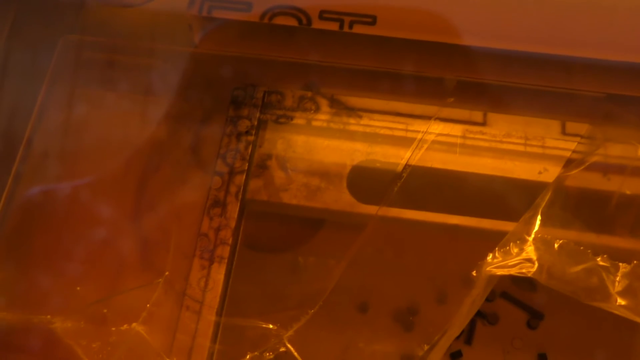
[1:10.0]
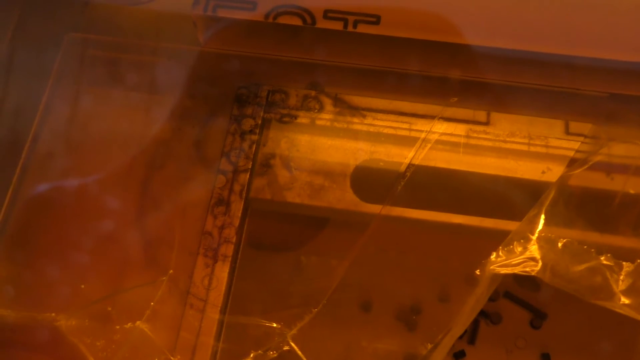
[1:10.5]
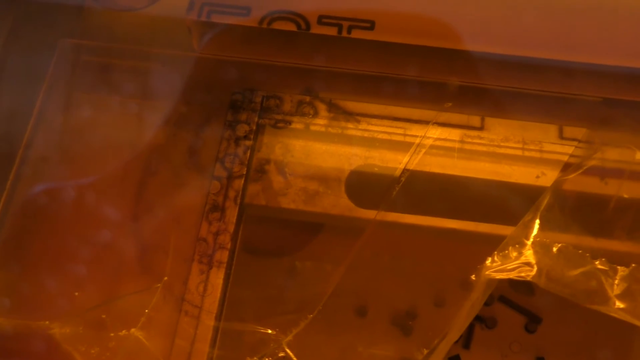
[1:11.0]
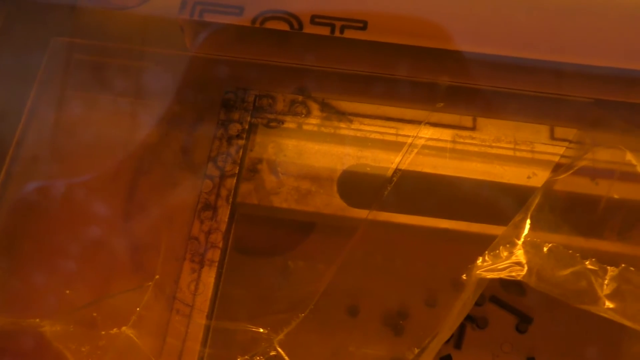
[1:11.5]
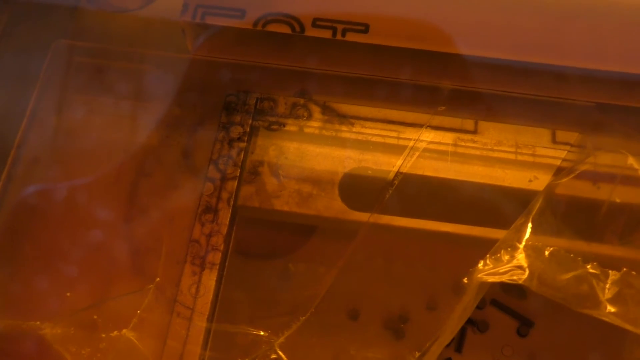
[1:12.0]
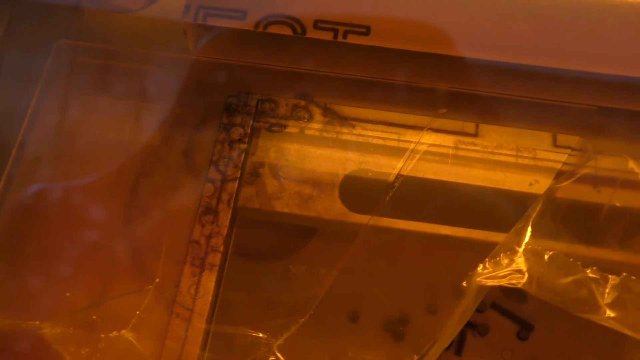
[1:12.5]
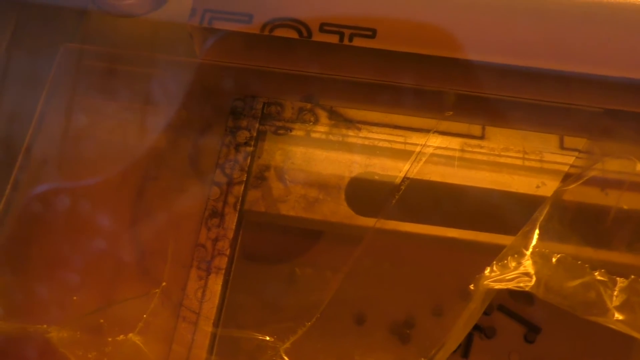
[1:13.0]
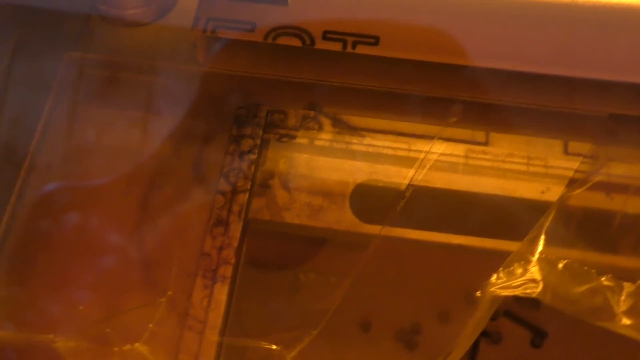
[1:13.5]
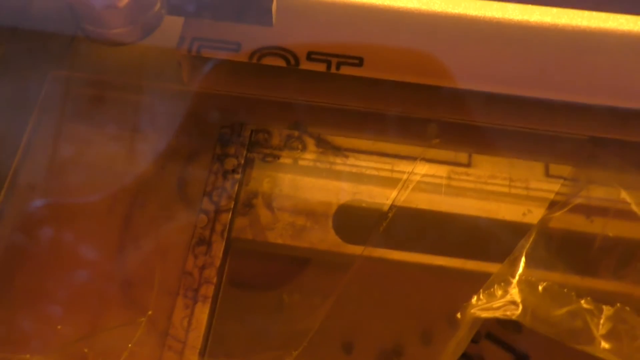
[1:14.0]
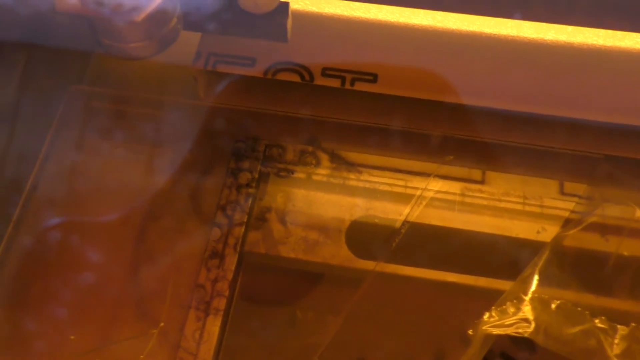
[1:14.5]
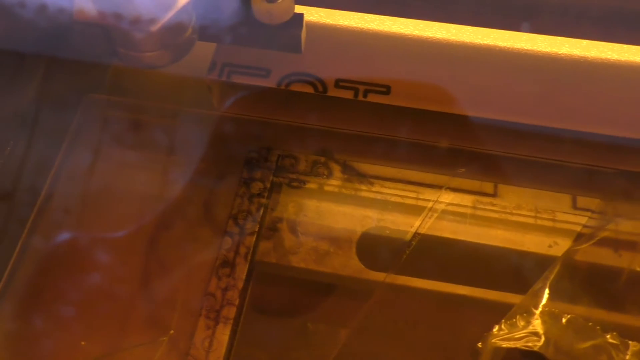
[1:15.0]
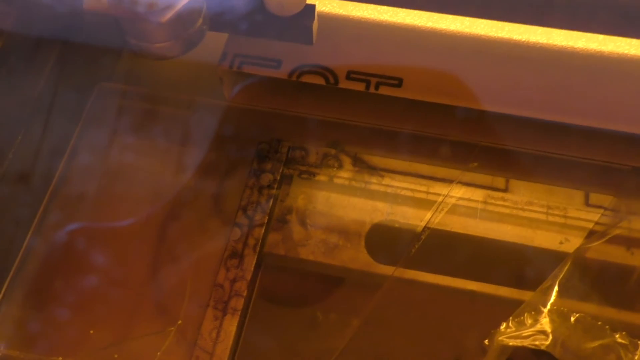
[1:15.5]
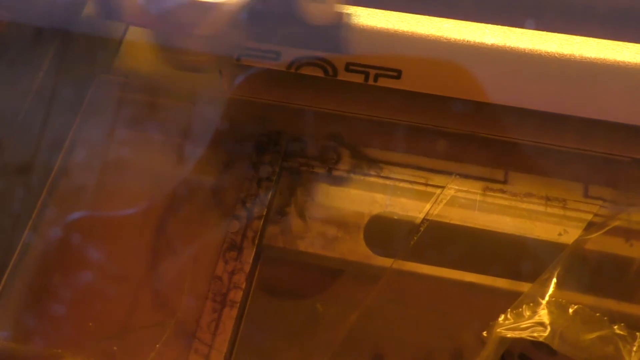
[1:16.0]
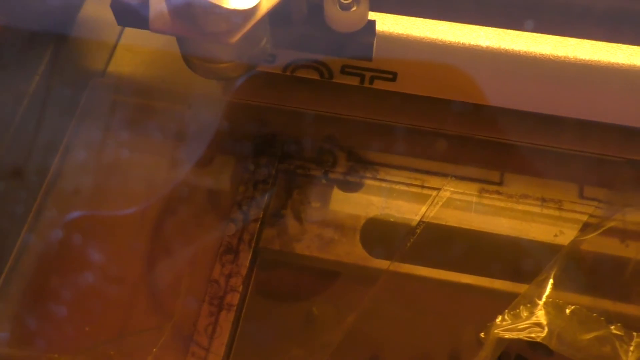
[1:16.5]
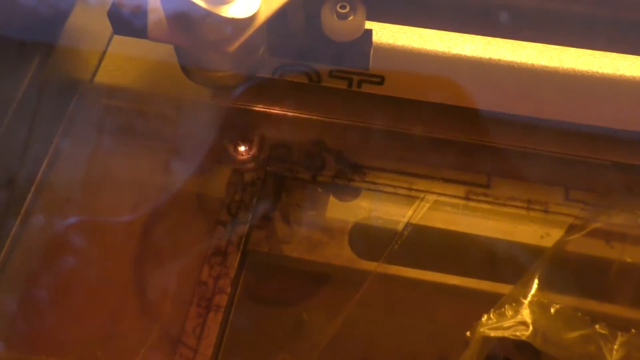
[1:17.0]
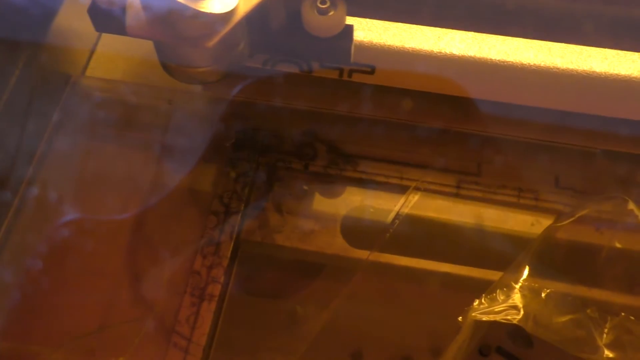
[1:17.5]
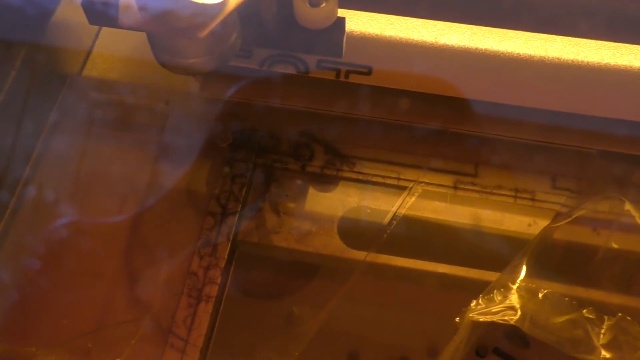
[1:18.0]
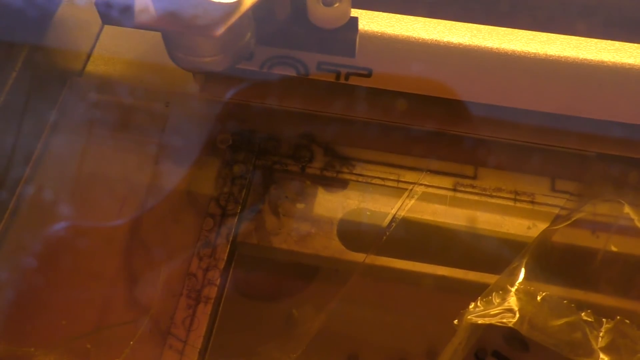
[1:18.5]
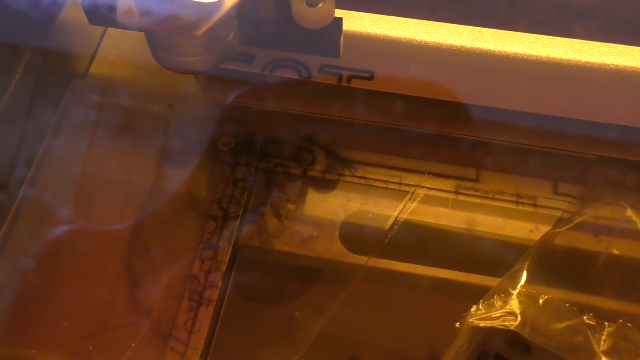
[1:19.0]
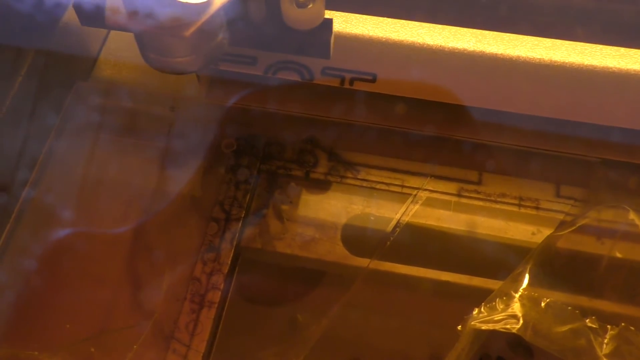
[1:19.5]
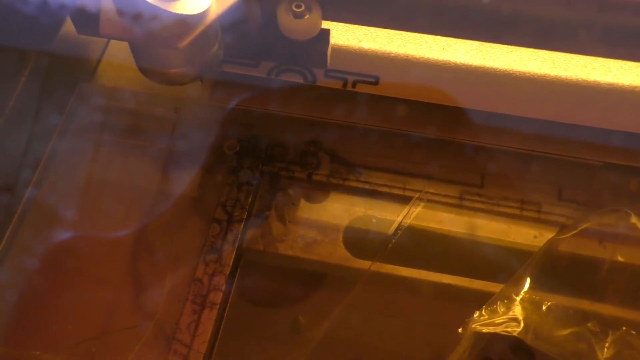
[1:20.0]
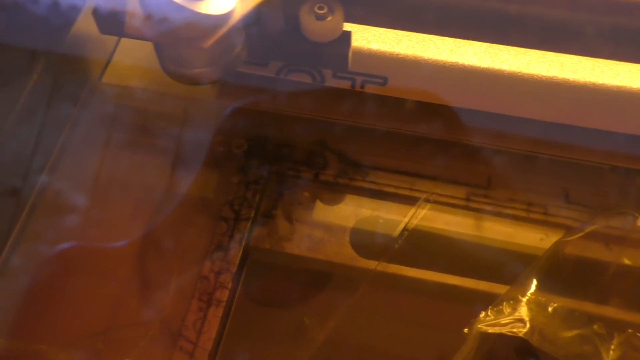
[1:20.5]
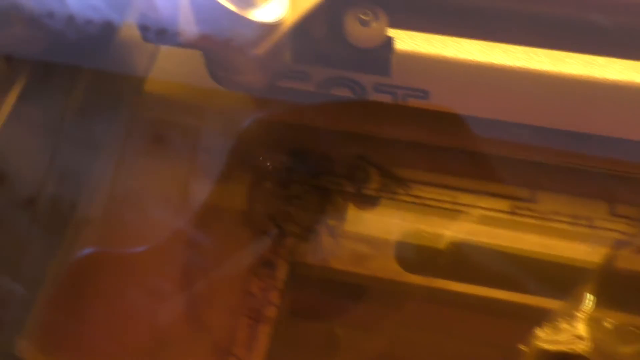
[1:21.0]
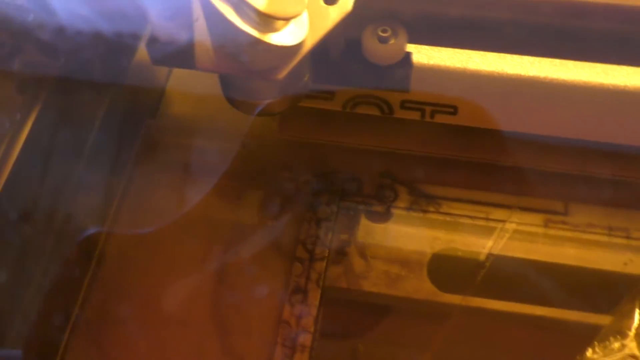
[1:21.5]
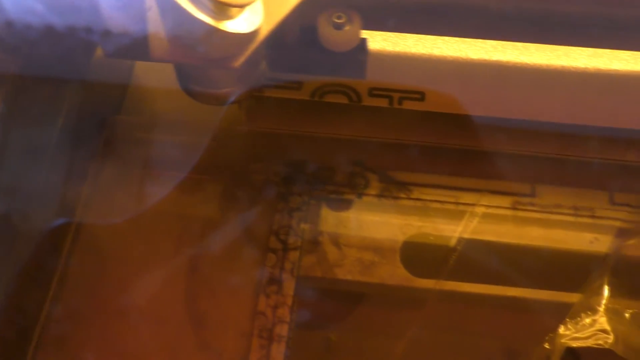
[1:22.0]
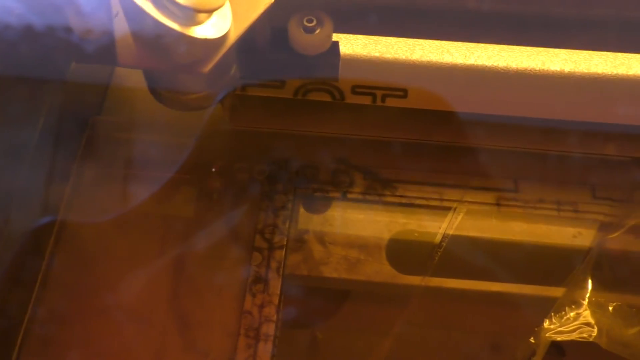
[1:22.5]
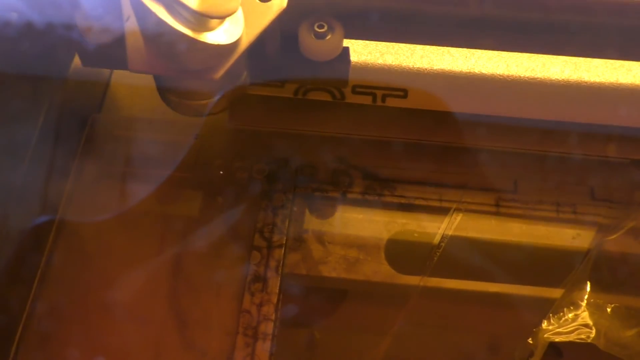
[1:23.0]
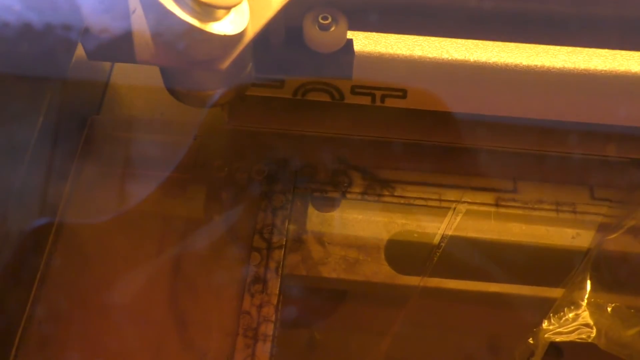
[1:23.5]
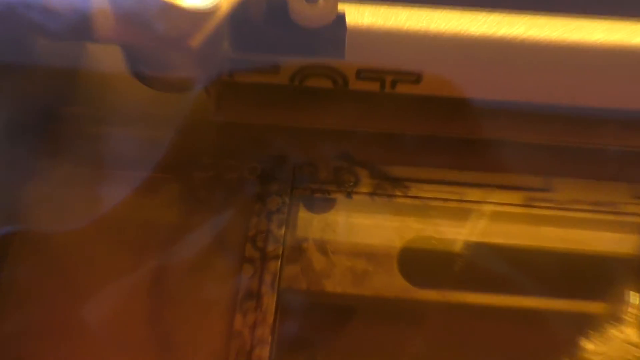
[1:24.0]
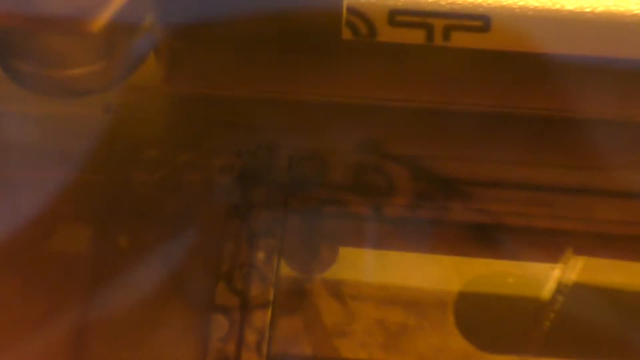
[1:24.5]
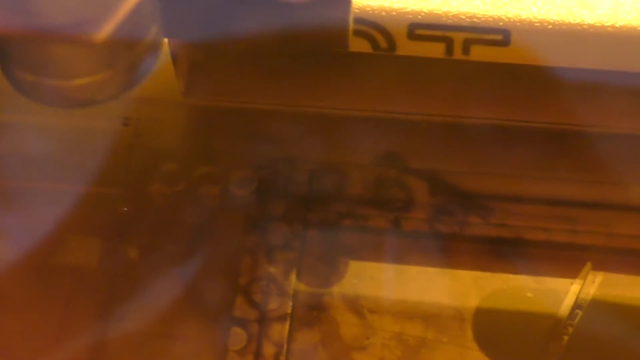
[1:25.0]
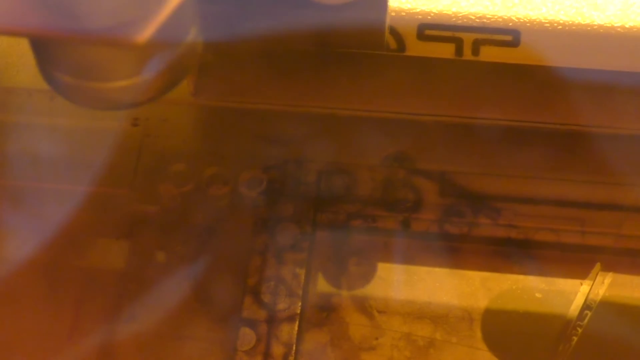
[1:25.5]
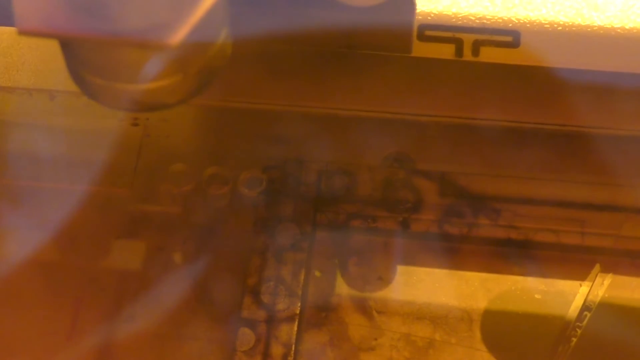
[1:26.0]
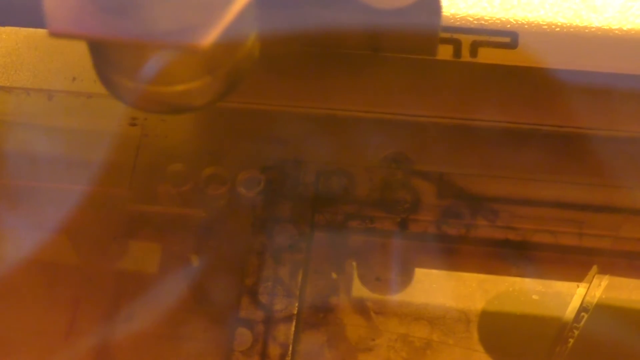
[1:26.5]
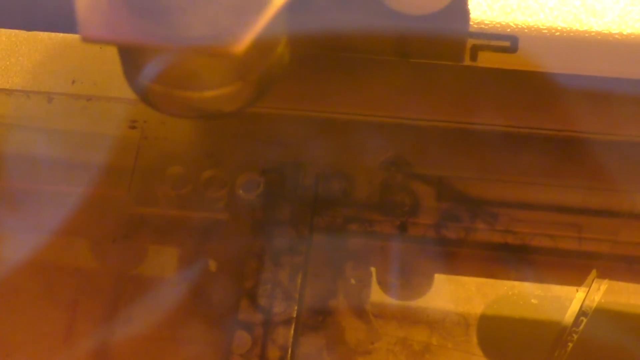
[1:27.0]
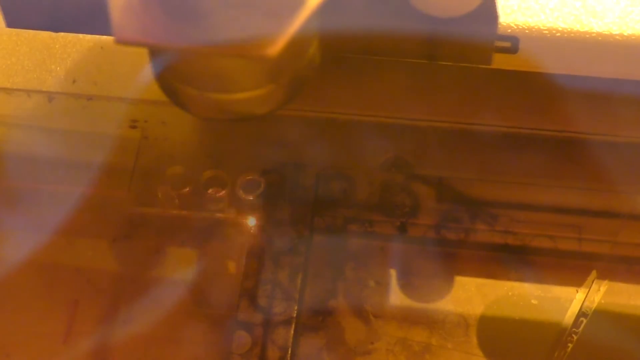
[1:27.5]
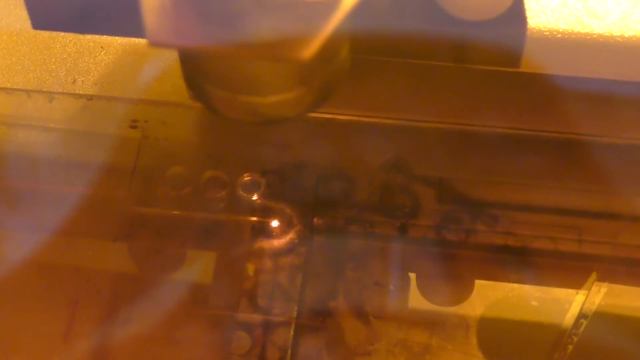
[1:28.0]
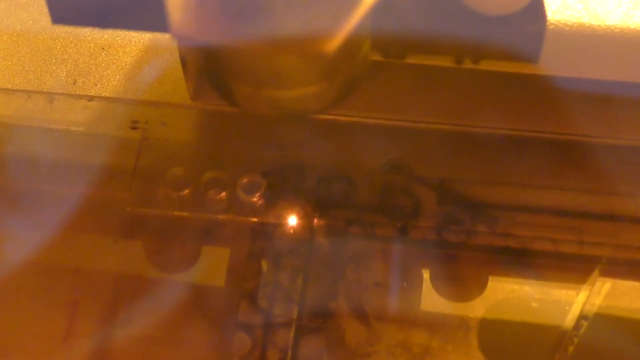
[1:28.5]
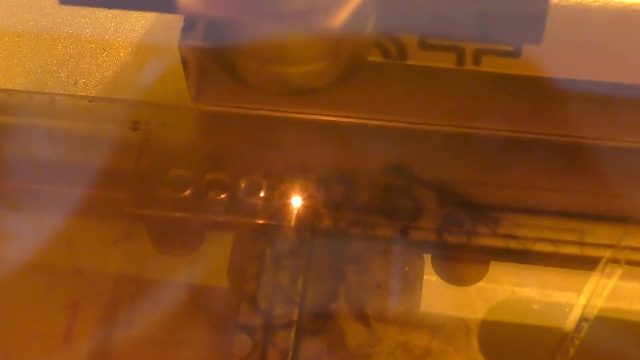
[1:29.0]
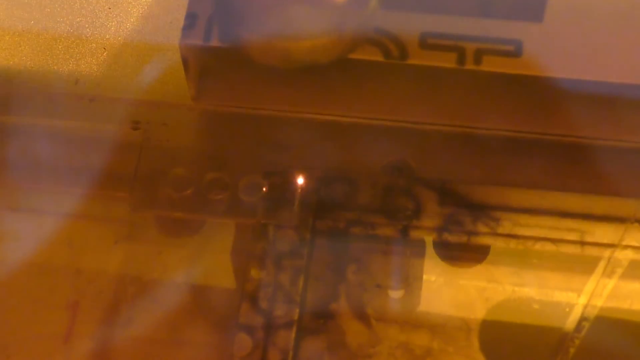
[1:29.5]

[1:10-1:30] The machine now engraves letters. They are not clearly visible, but they look like the letters O, C and T. The letters are still incomplete; apparently only their upper parts have been engraved so far. The letters are engraved from left to right in a neat, organised manner, the machine scanning back and forth rhythmically and leaving a smooth dark design.